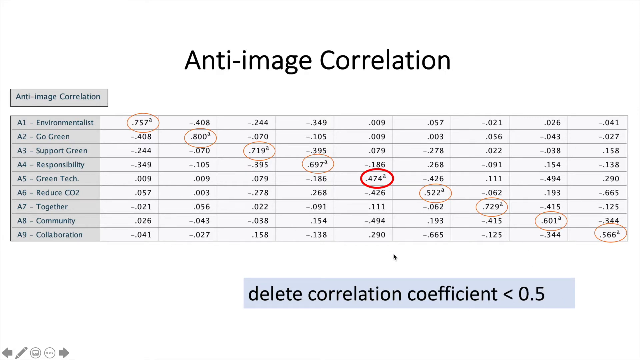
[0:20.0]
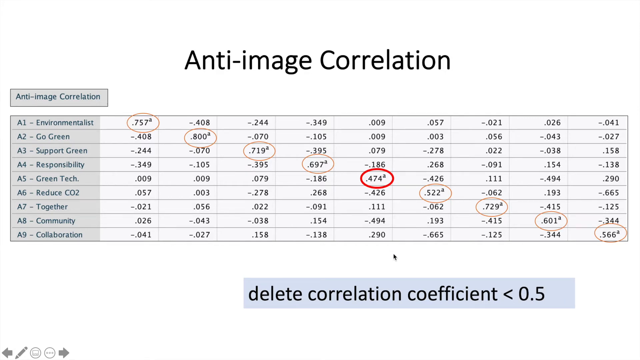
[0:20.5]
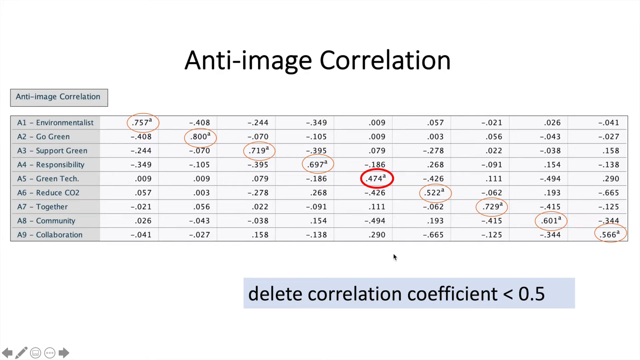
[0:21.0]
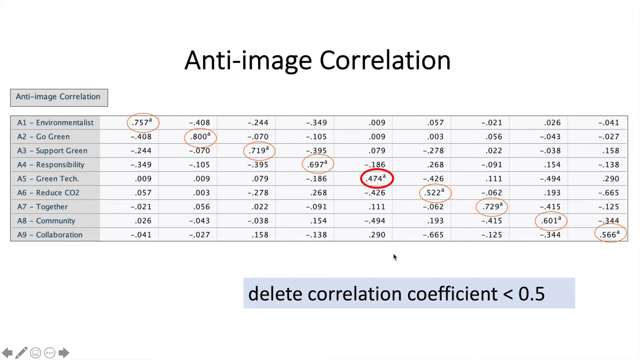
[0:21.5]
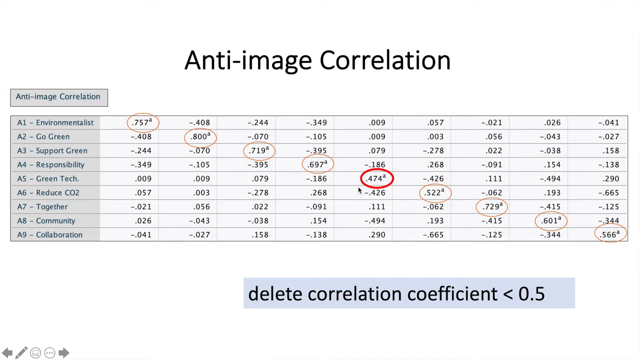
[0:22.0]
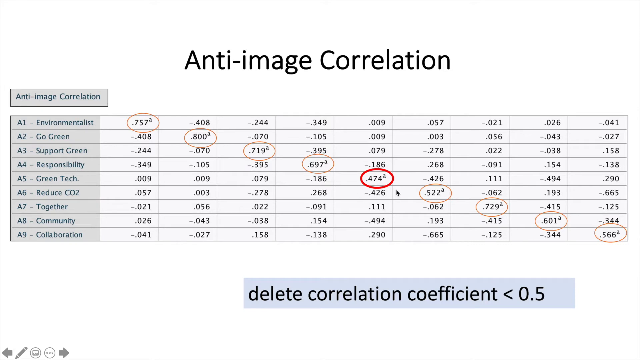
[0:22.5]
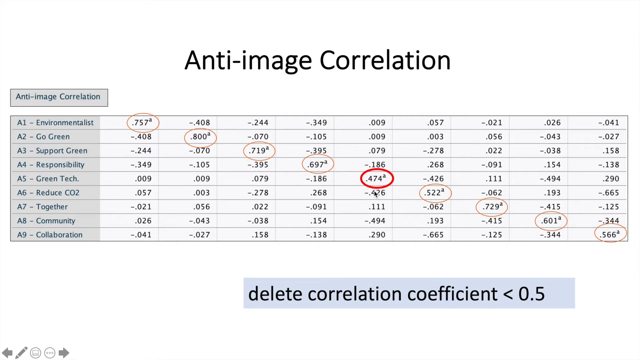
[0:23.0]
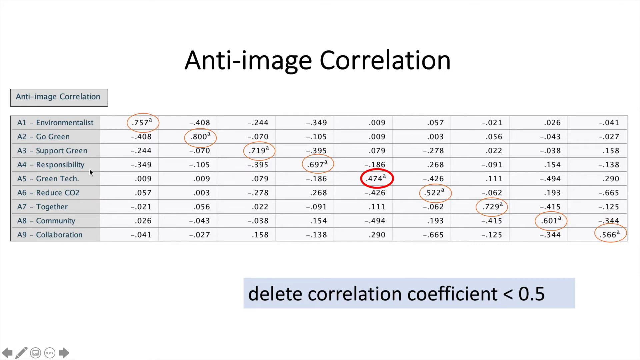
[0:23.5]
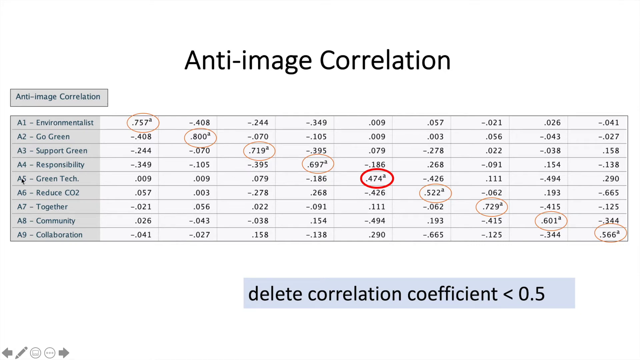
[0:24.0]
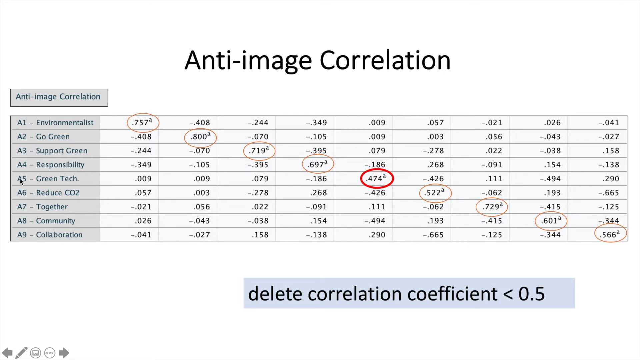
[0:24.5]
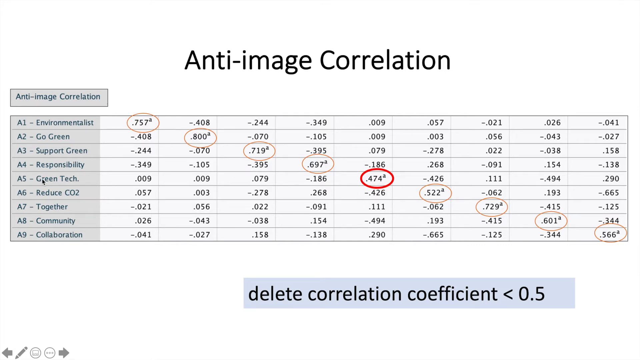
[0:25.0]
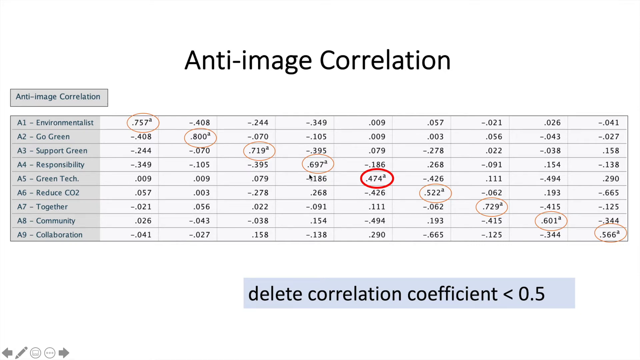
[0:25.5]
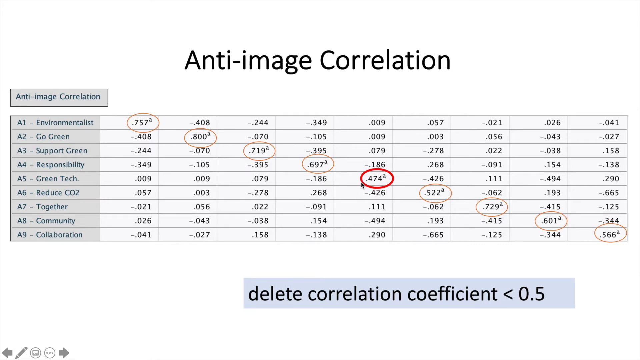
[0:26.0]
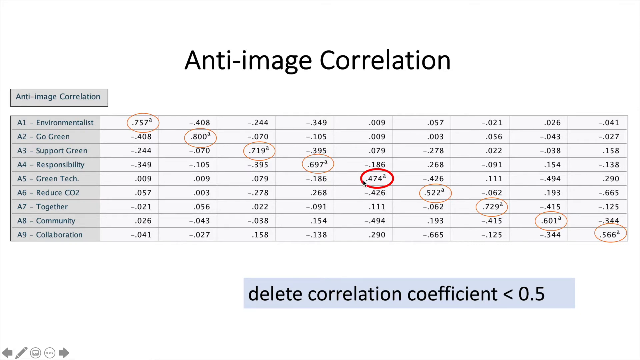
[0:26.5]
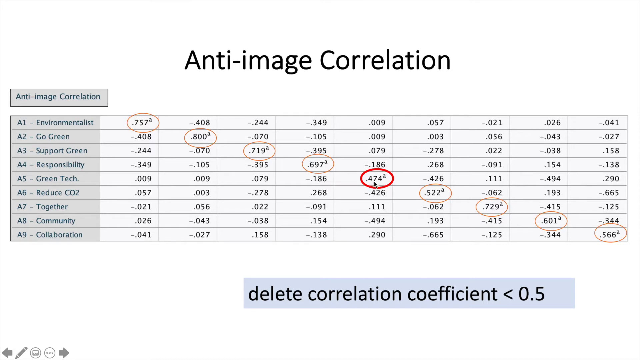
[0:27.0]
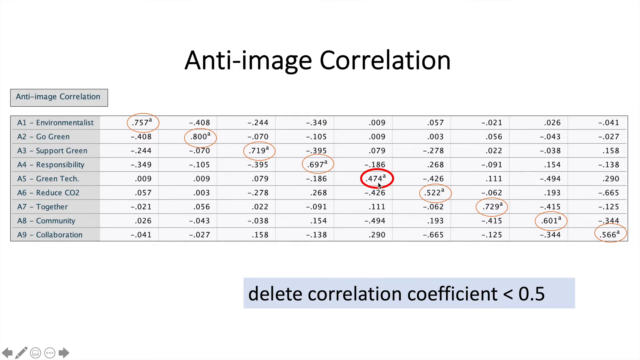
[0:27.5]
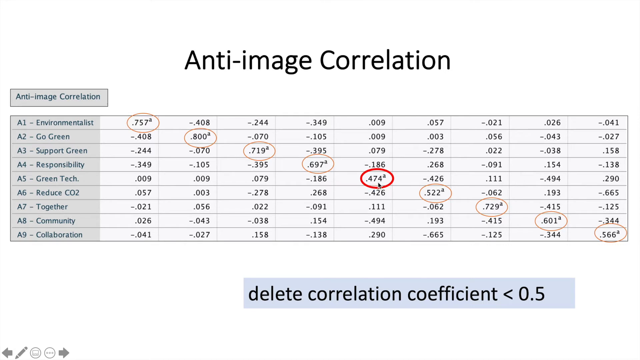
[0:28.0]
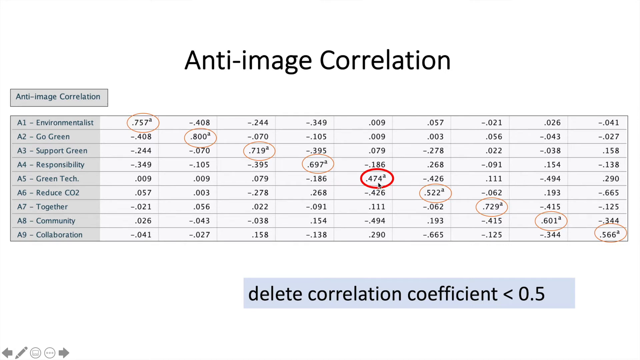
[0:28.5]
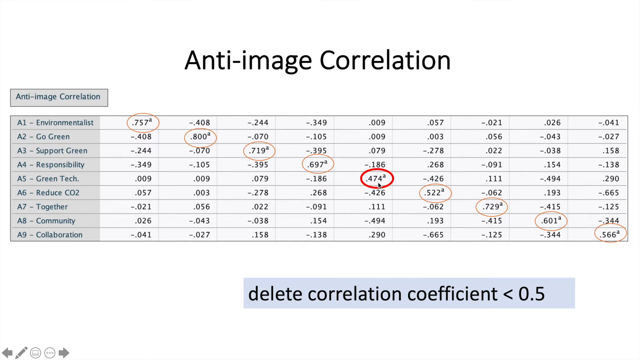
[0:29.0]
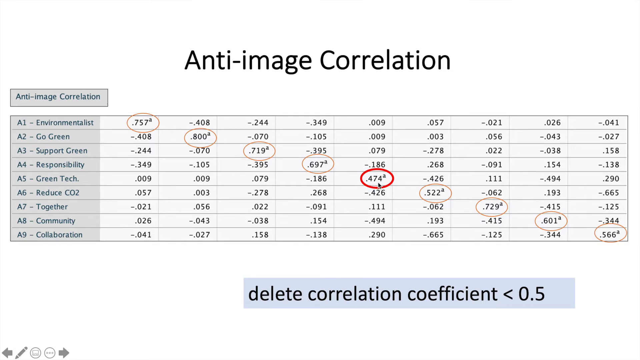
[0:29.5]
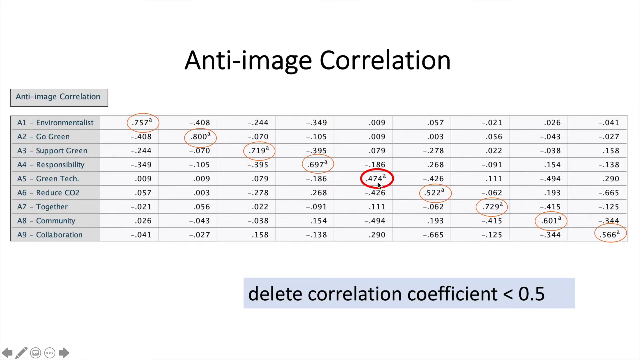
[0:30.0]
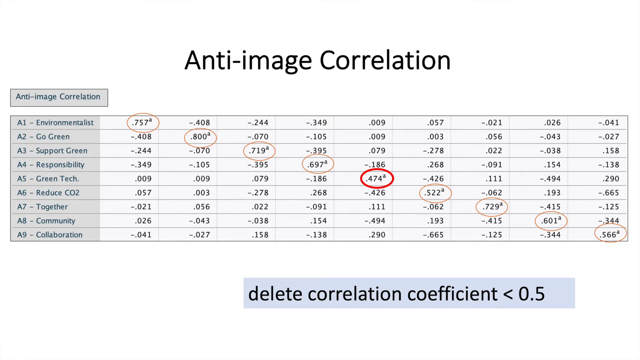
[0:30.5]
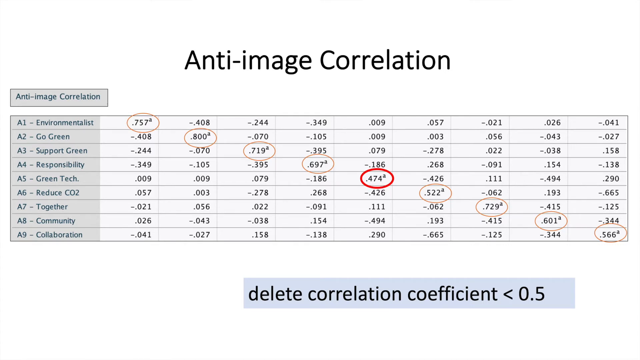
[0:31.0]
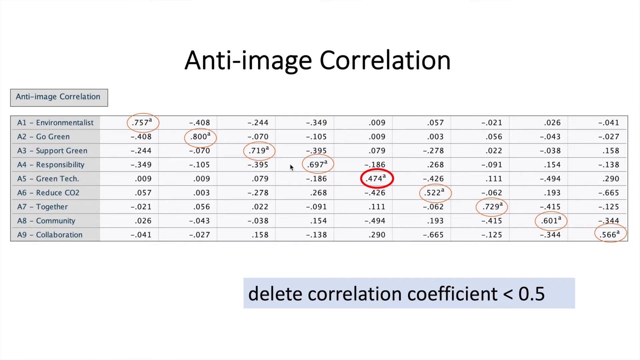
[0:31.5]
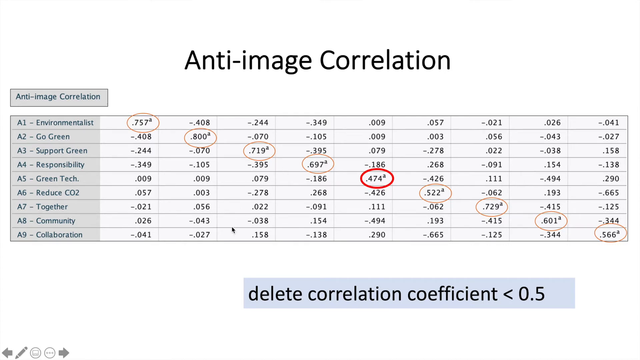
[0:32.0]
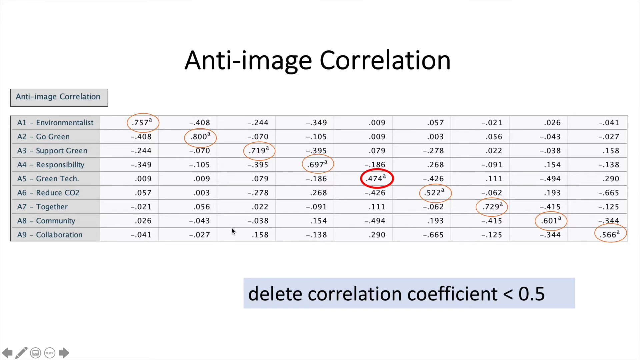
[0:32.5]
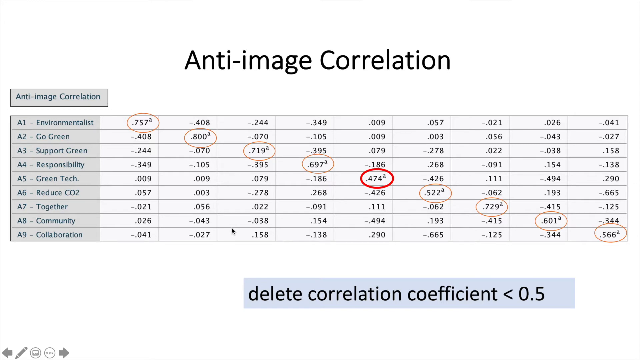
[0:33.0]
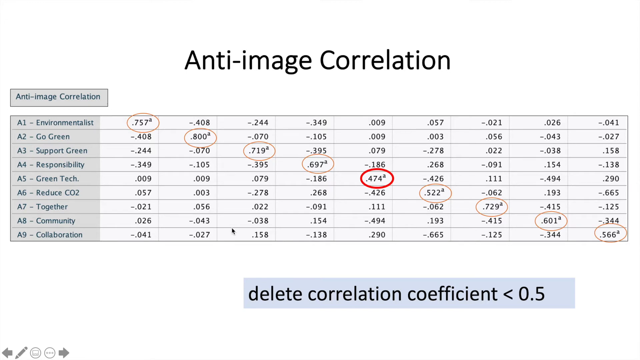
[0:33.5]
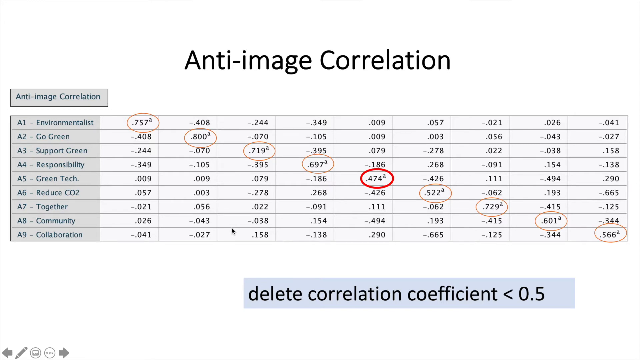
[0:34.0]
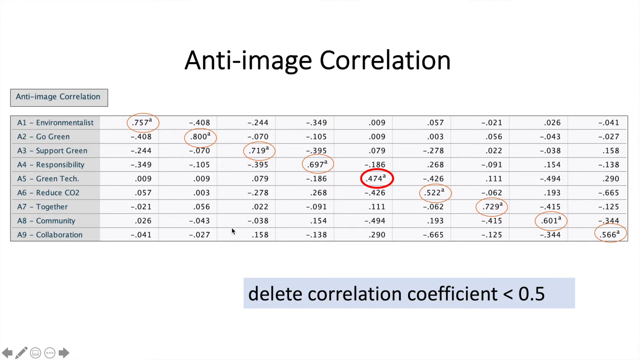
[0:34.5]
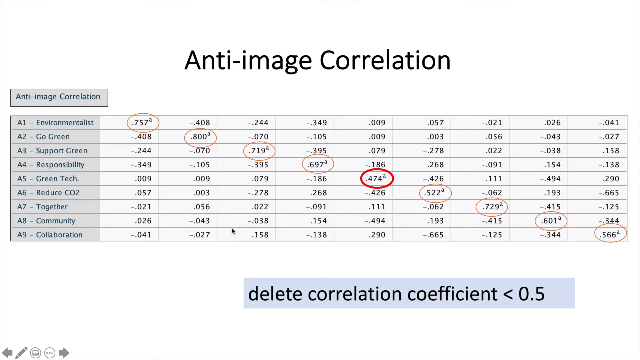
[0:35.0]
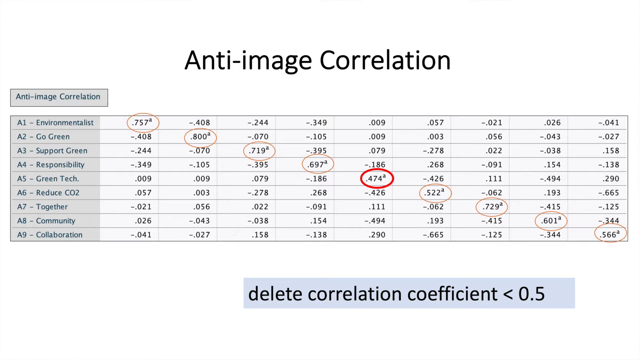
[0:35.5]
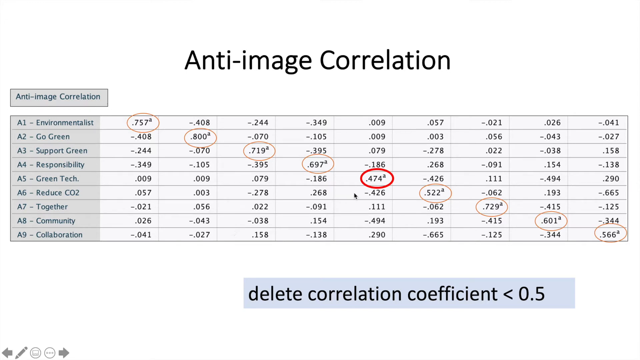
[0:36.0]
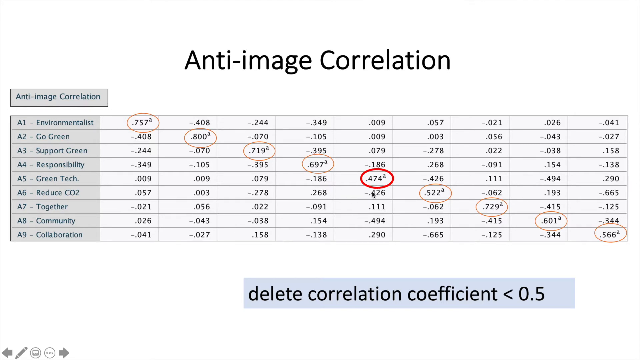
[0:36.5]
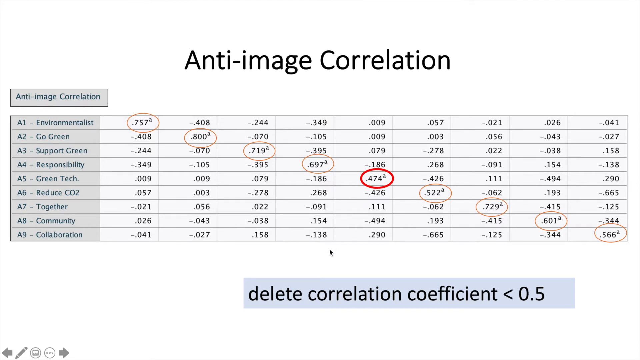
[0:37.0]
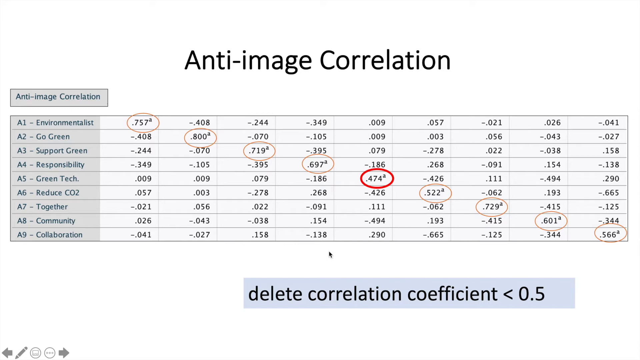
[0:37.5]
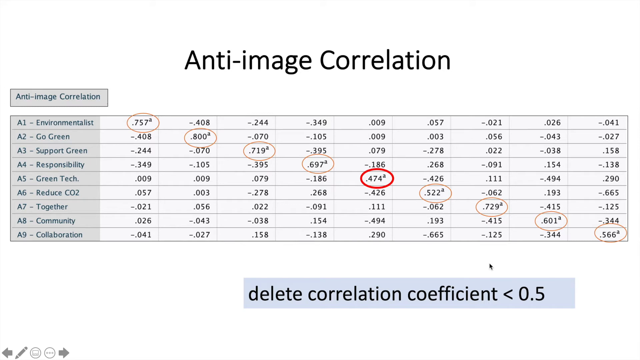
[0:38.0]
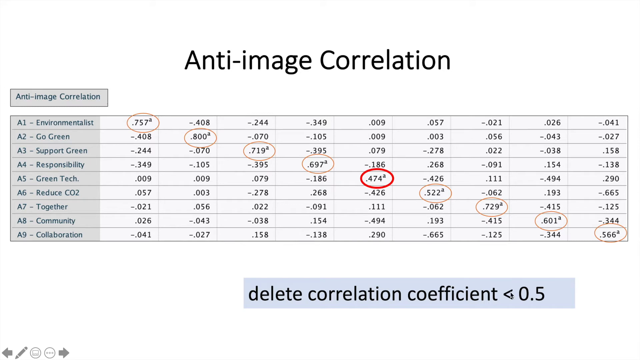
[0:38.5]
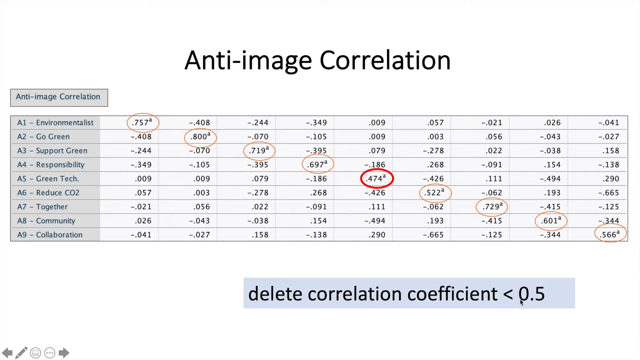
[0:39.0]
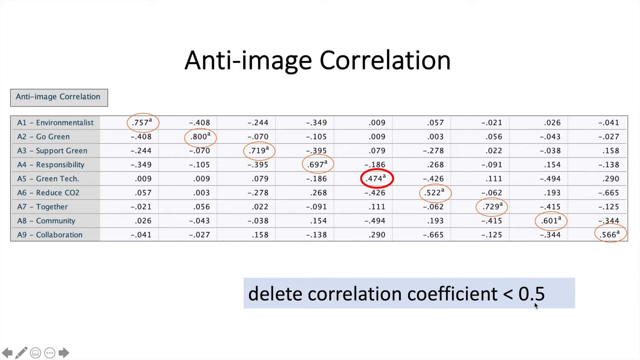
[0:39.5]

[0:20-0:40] A chart on a white background is shown on a slide titled "anti-image correlation". Below the title, on the left, is a gray box reading "anti-image correlation" in green. Below that is the chart. The first column lists, from top to bottom: "A1 environmentalist", "A2 go green", "A3 support green", "A4 responsibility", "A5 green tech", "A6 reduce CO2", "A7 together", "A8 community", "A9 collaboration". Values are to the right of these words. The first row, from left to right, reads 0.757, -0.408, -0.244, -0.349, 0.009, 0.057, -0.021, 0.026, -0.041. The second row reads -.408, .800, -.070, -.105, .009, .003, .056, -.043, -.027. The rest of the values are also filled in, and circles run along a diagonal on the values.